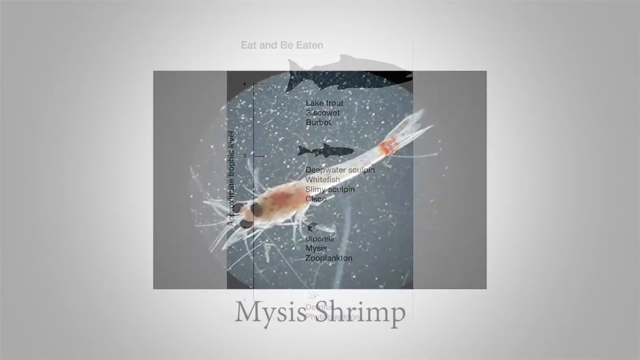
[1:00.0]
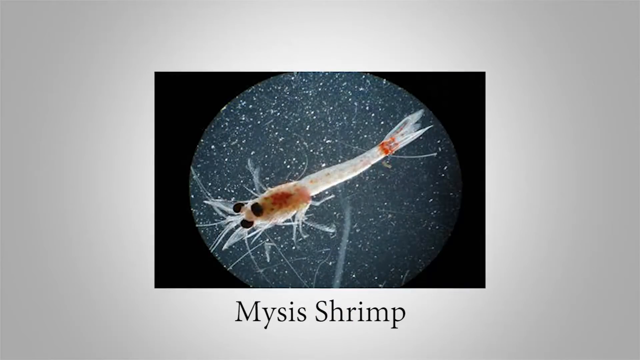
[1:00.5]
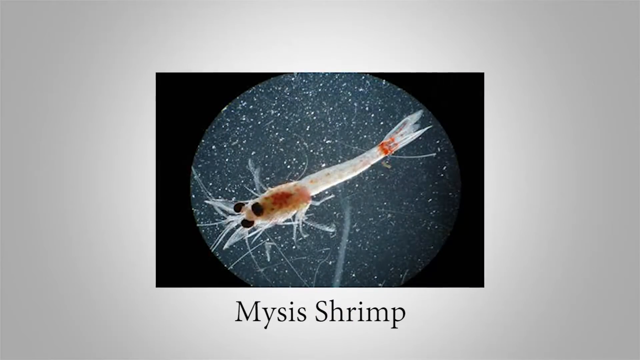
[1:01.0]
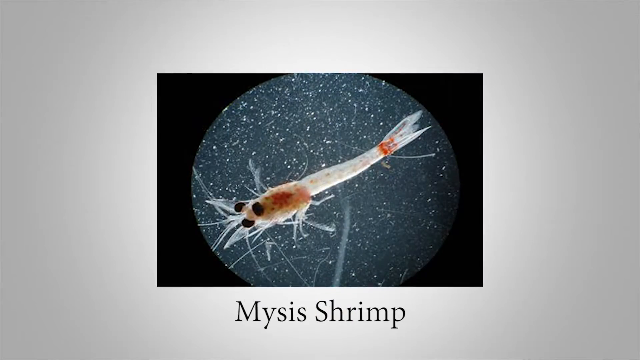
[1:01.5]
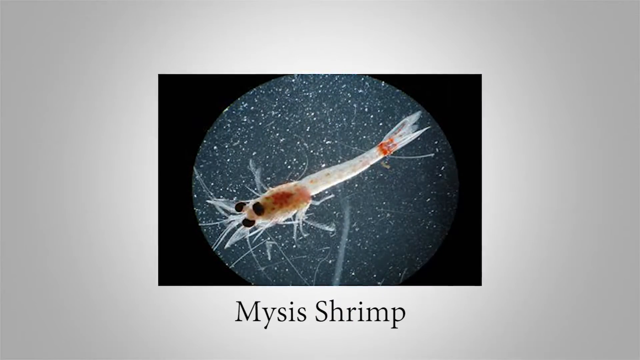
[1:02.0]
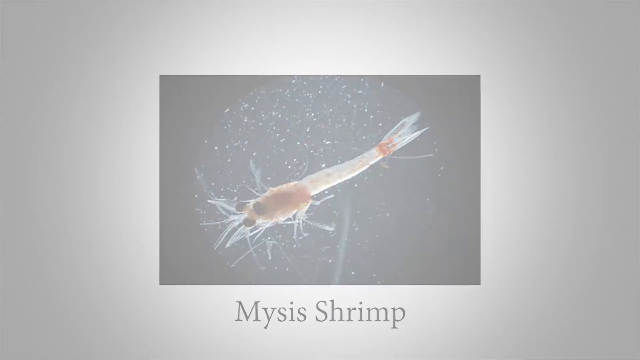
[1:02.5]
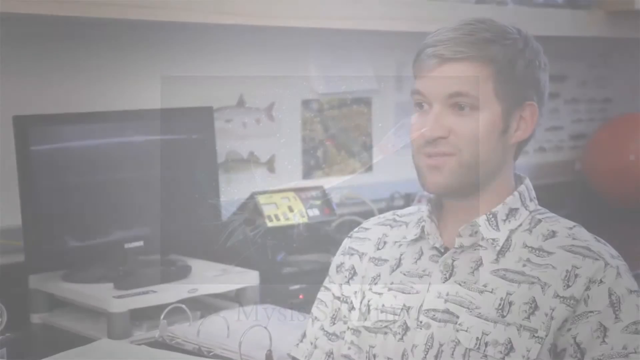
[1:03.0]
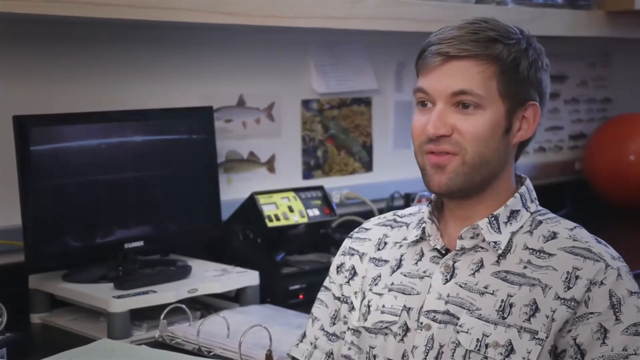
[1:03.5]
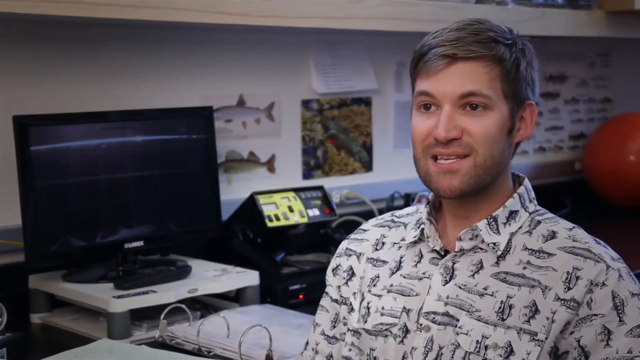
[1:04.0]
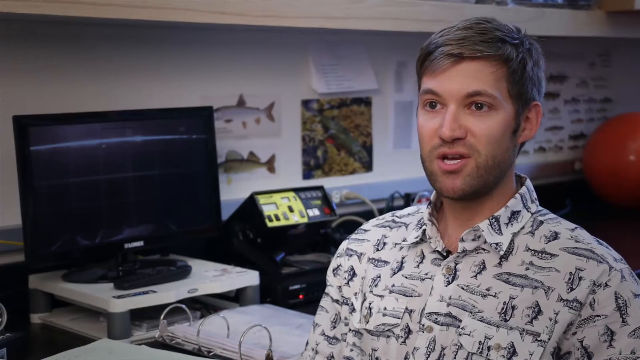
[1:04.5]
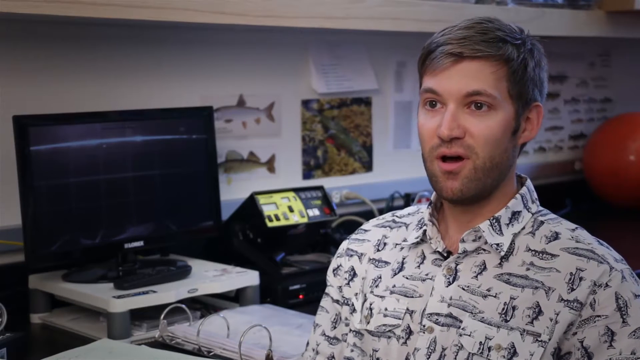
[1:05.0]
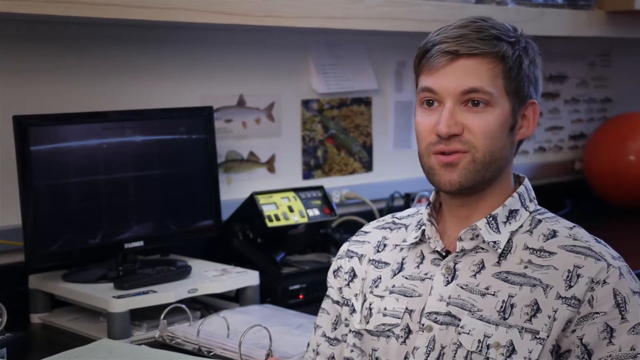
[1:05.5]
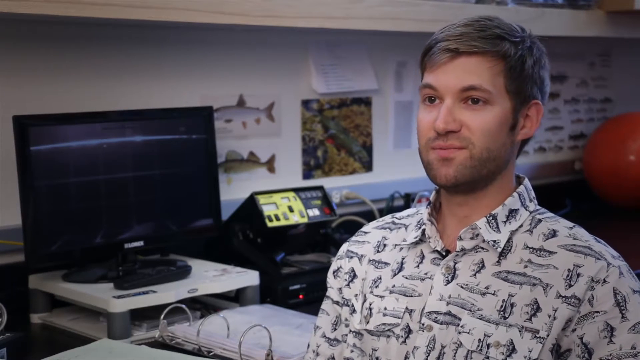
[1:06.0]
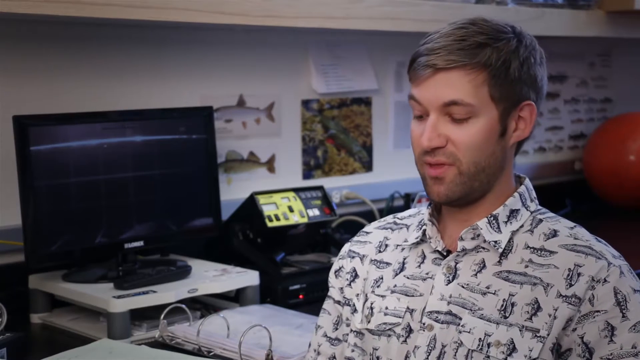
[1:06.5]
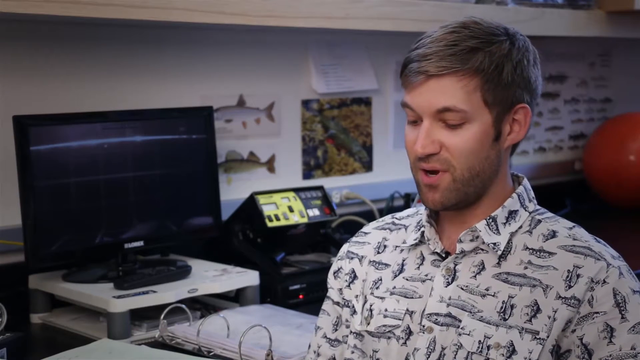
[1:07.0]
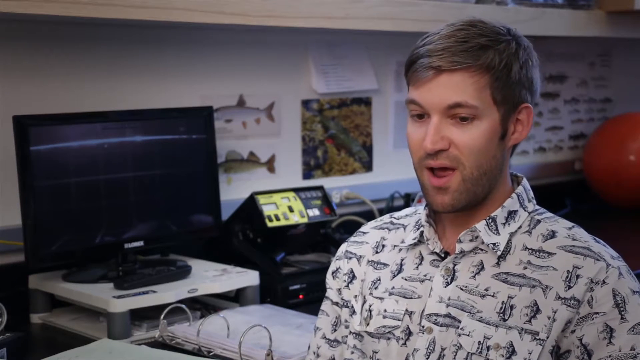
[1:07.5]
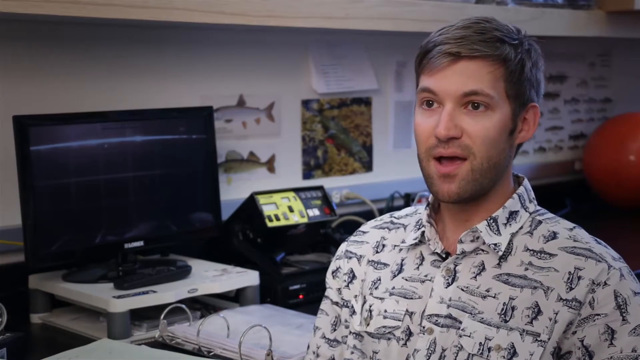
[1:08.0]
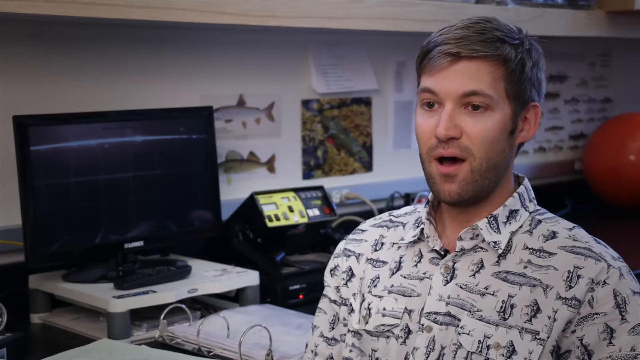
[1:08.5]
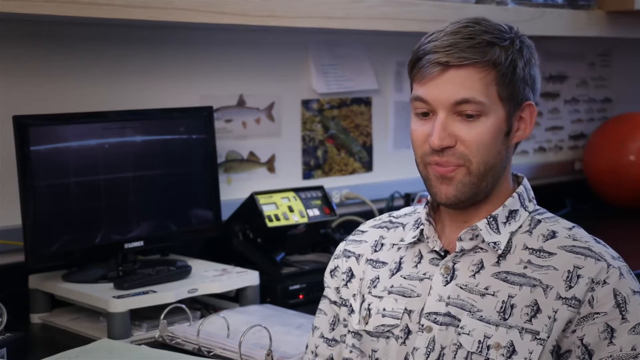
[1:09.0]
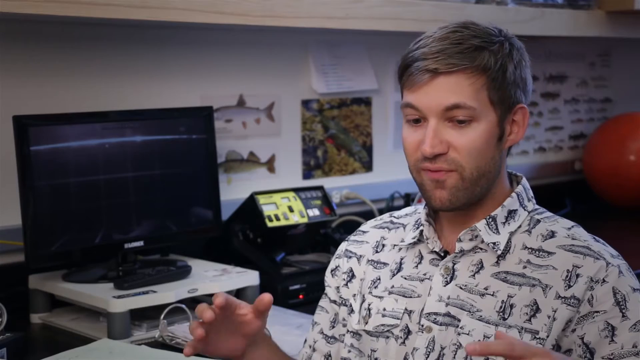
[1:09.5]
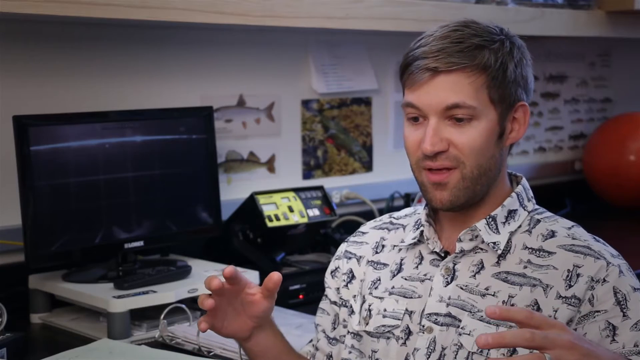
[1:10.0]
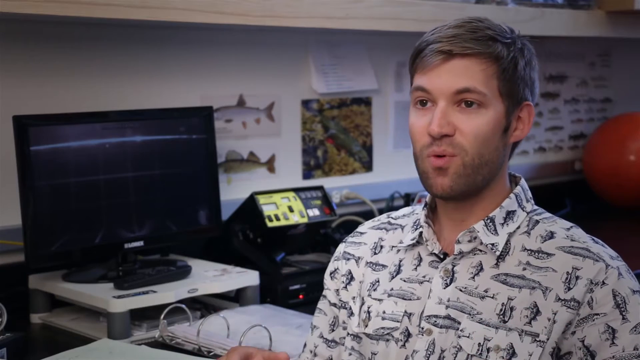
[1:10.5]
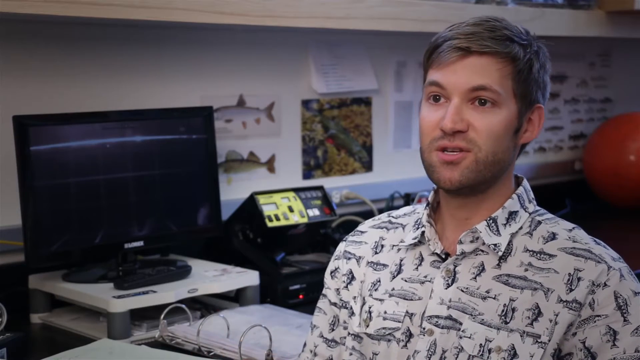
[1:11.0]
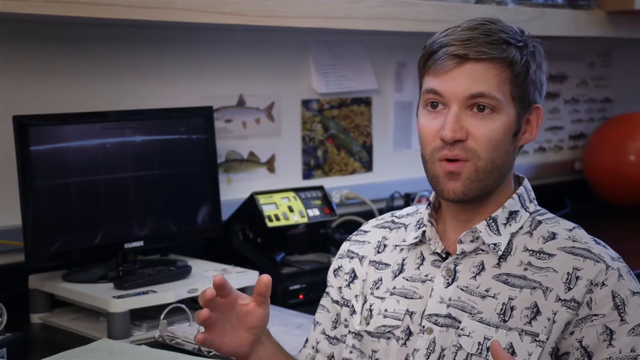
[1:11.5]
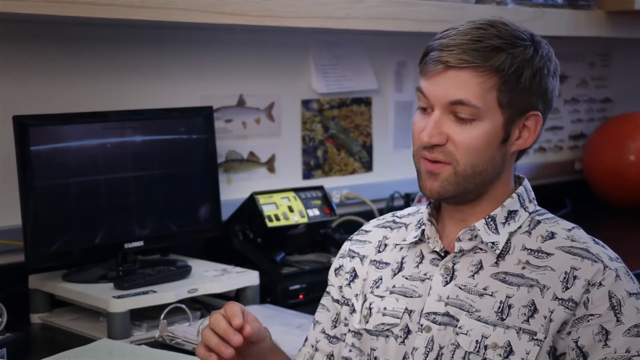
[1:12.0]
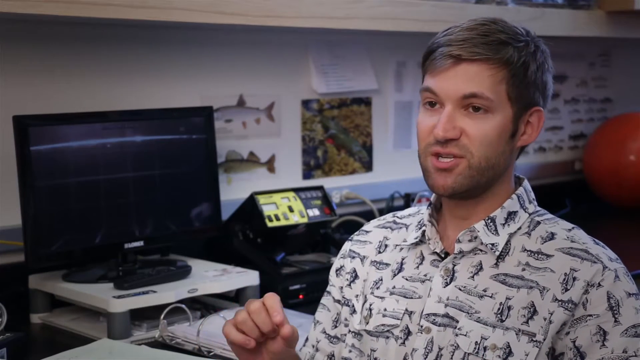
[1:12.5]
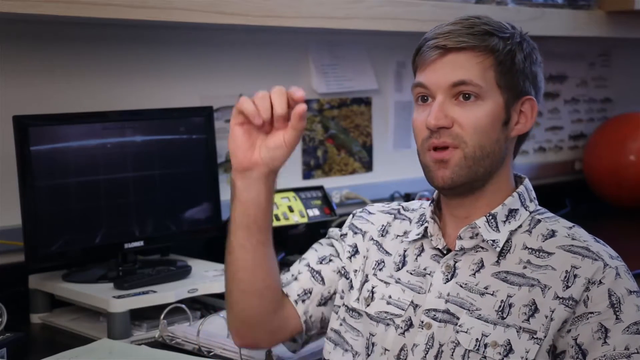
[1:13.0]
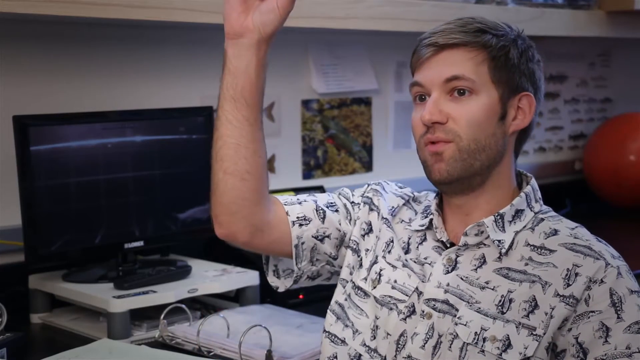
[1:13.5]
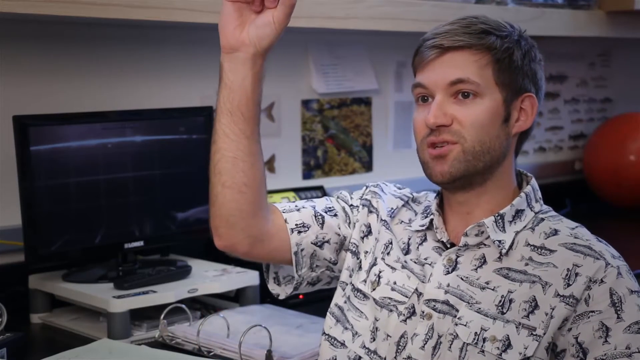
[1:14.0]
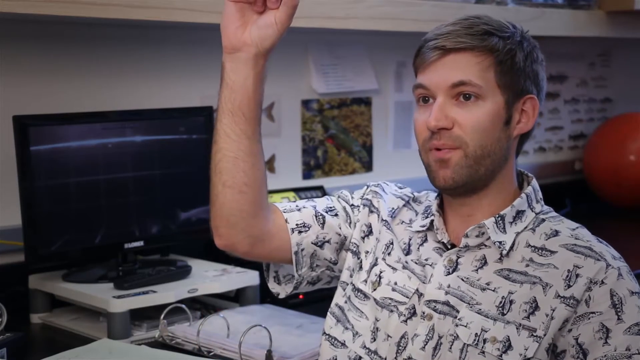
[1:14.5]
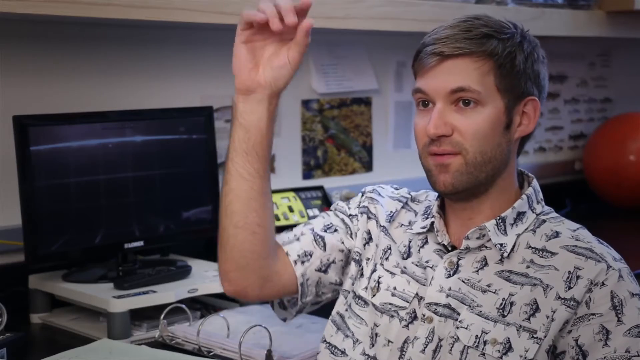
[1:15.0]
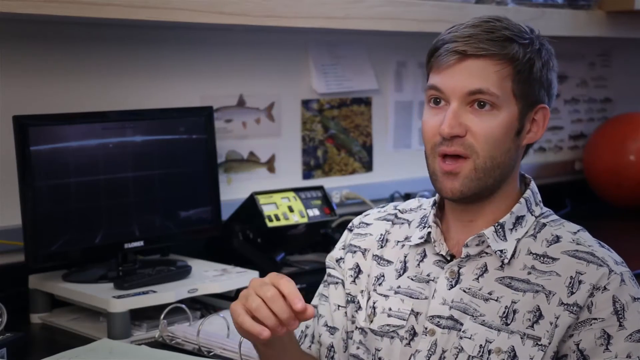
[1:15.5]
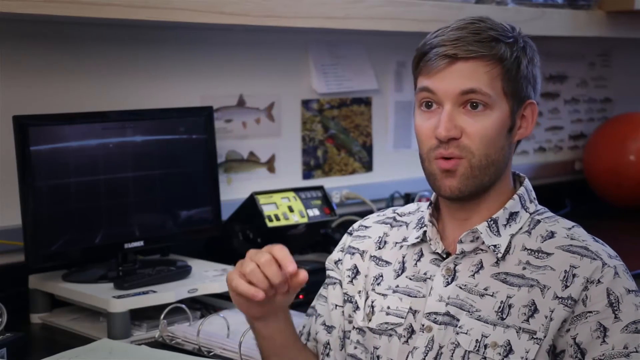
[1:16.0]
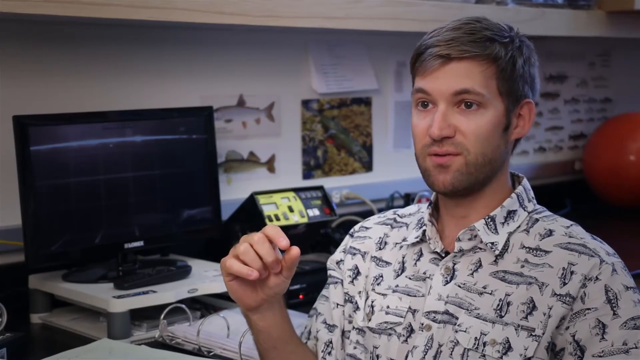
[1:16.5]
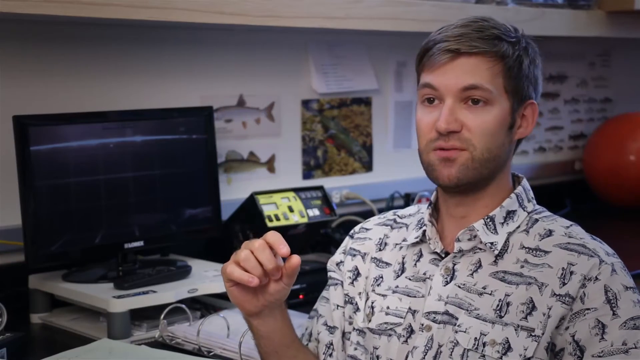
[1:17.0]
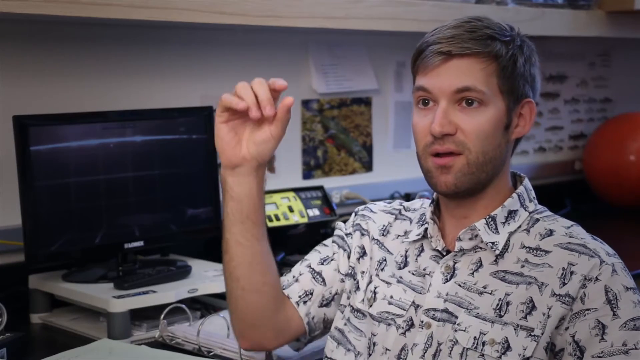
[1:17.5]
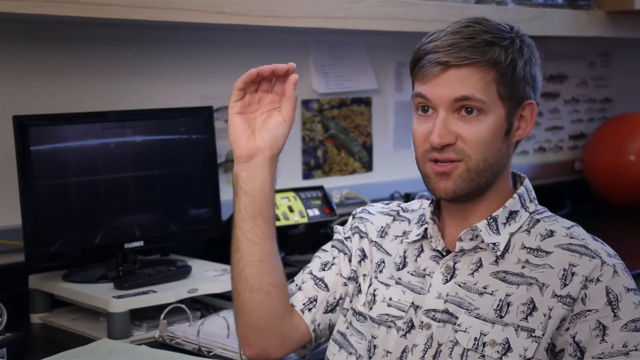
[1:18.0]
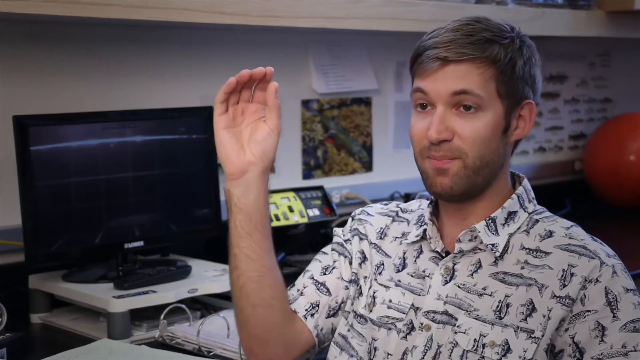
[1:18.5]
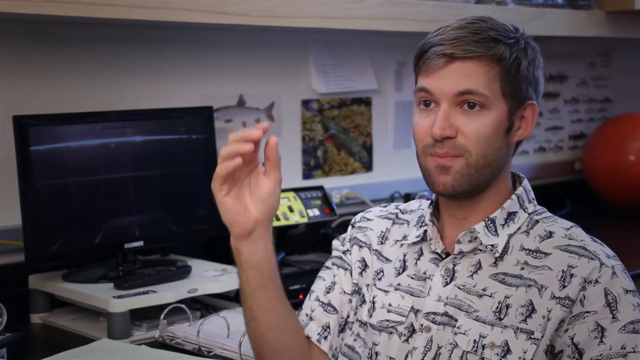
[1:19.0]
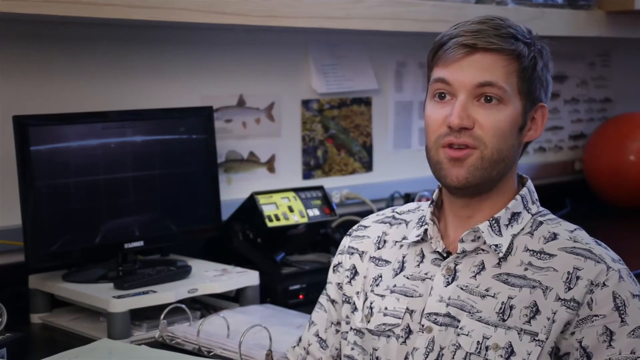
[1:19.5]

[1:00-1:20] A very close-up image shows a Mysis shrimp with three eye-looking things, a long silver body, a brown head, a small red patch on the tail, and tiny legs that almost look like bristles. The video then cuts to a white man in his office with dirty blonde hair, brown eyes and a short beard, wearing a white shirt with fish on it. He is in front of his desk, which has a computer on it. In the background are a red ball, a whole bunch of fish charts on the wall, other equipment and various wires. He is talking and is very enthusiastic. A banner at the bottom gives his name as Trevor and identifies him as a research graduate. There is also a shelf in the background, some papers on the wall, and equipment with dials and switches; the wall is white, the desk is brown, and the computer has a black frame.